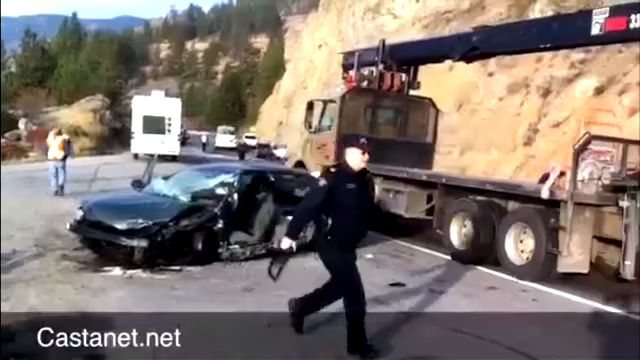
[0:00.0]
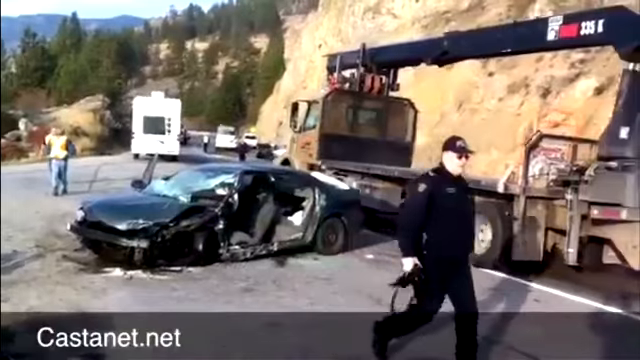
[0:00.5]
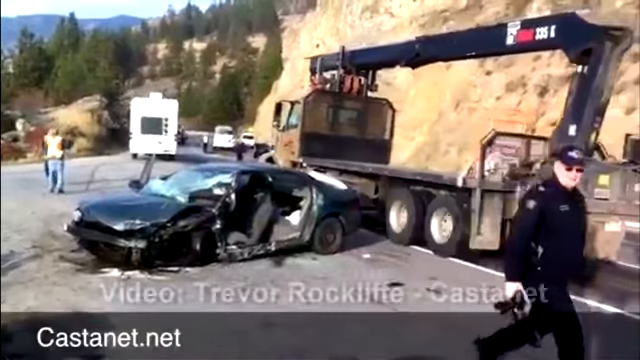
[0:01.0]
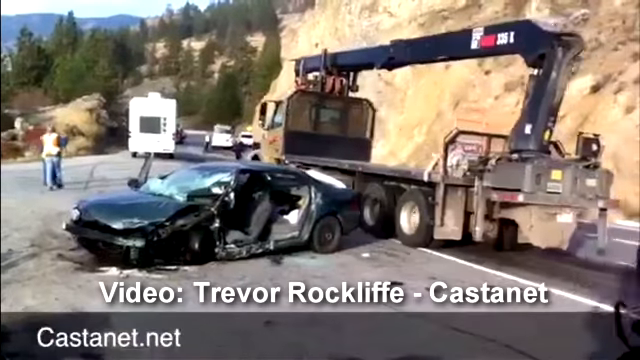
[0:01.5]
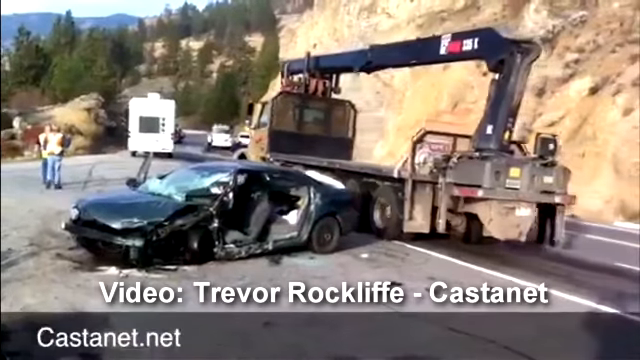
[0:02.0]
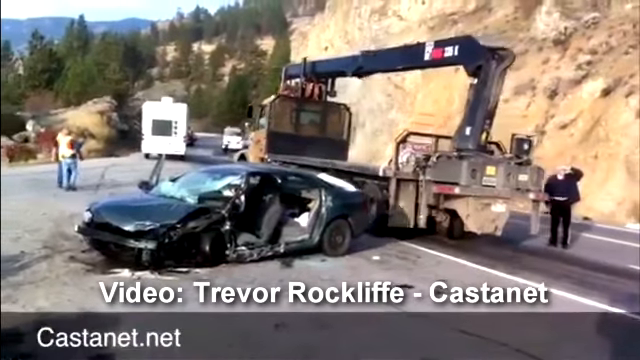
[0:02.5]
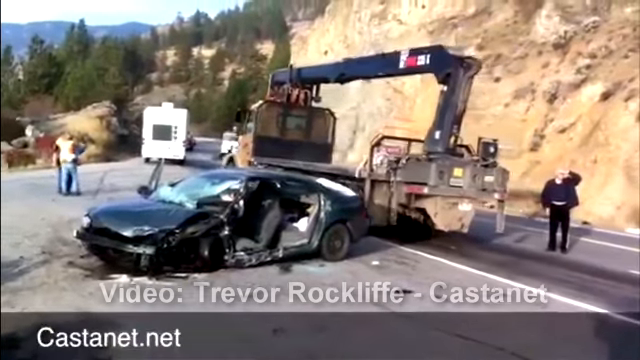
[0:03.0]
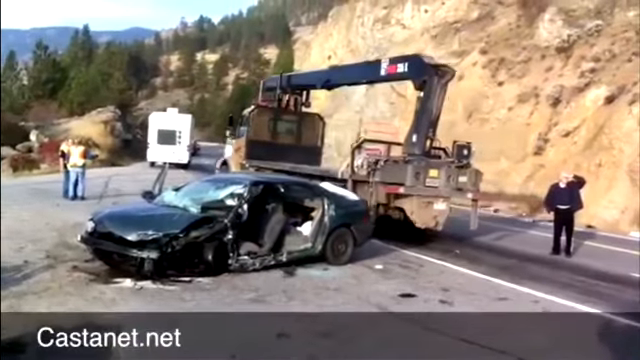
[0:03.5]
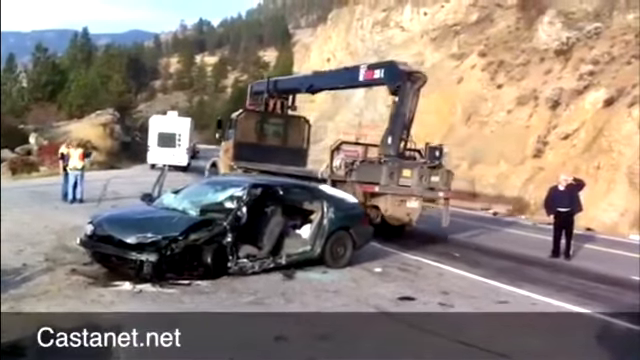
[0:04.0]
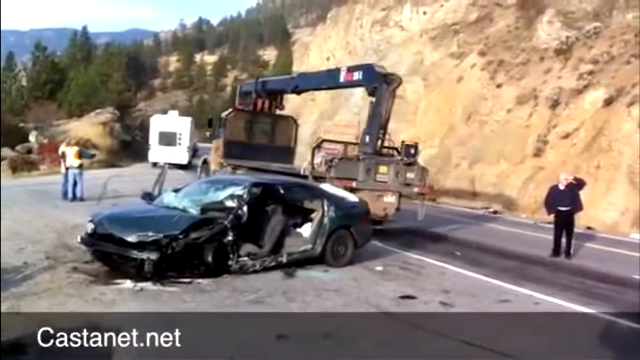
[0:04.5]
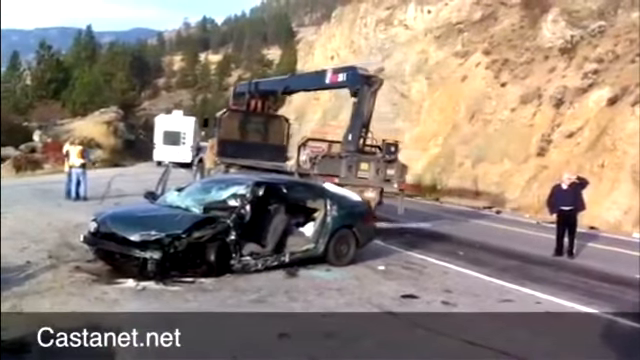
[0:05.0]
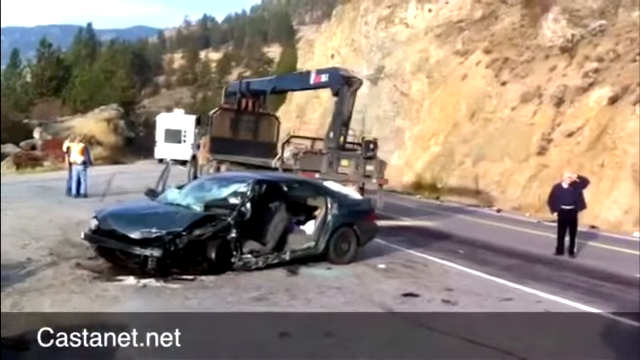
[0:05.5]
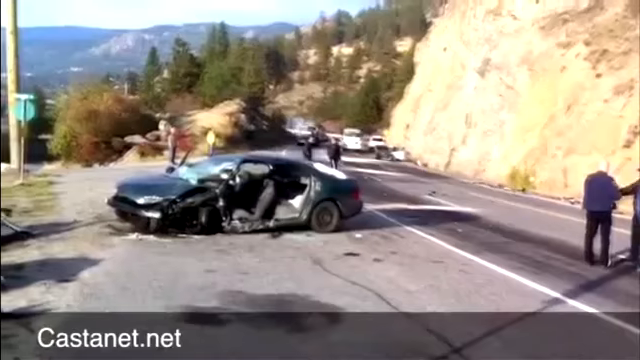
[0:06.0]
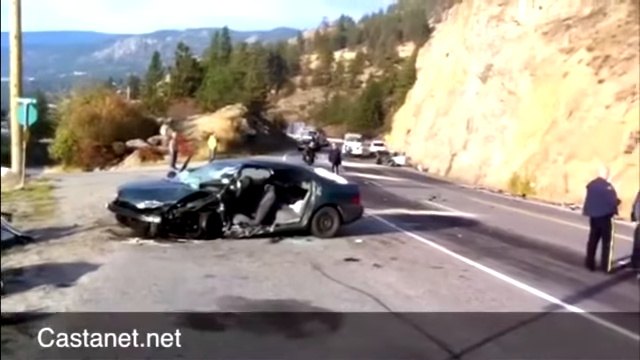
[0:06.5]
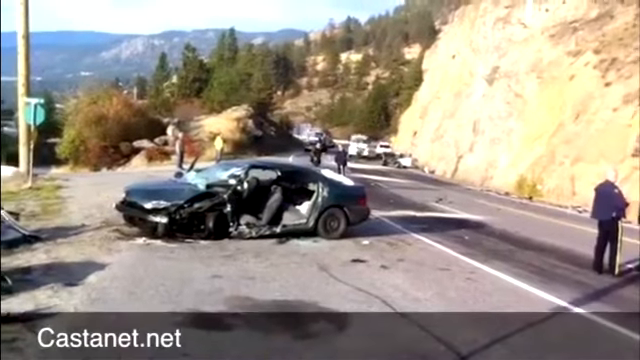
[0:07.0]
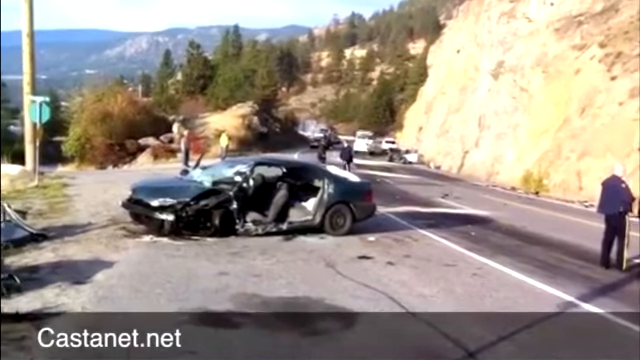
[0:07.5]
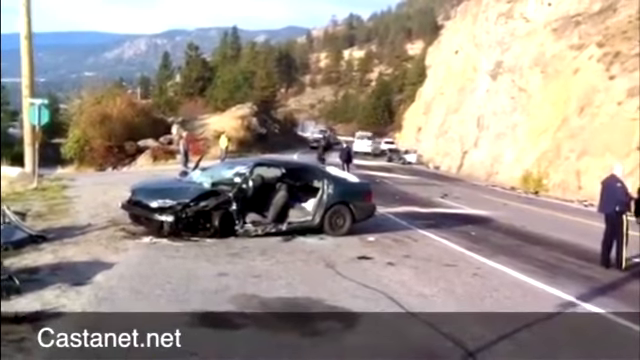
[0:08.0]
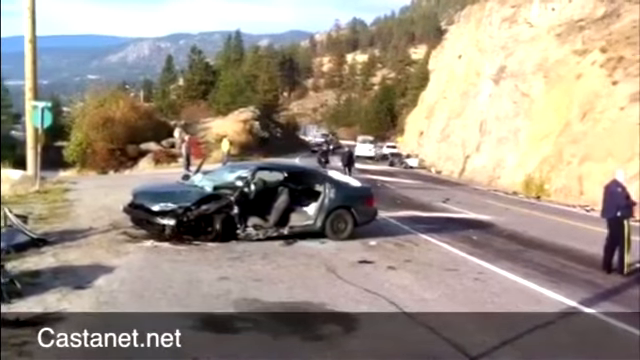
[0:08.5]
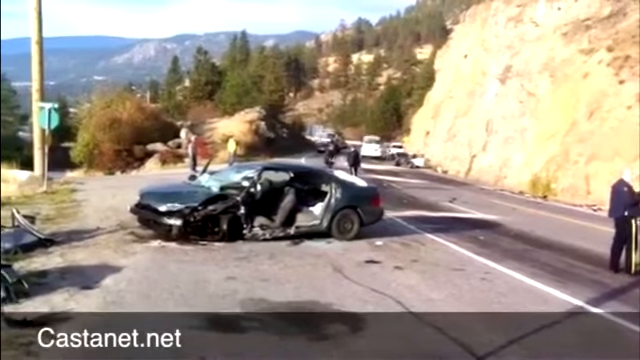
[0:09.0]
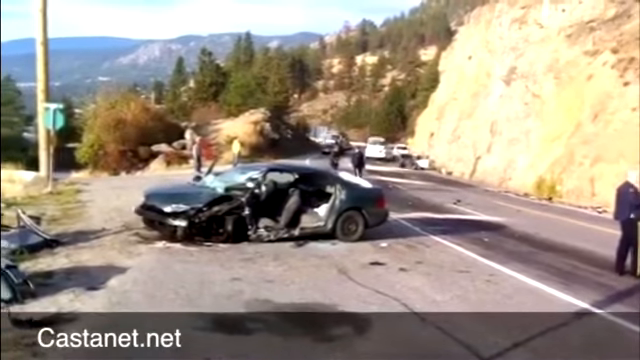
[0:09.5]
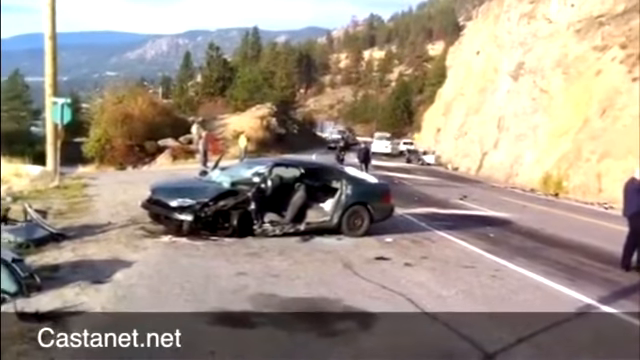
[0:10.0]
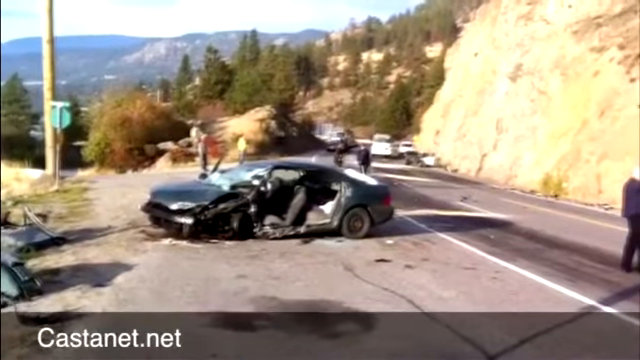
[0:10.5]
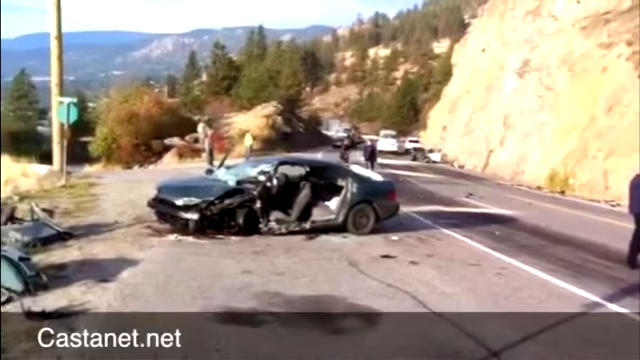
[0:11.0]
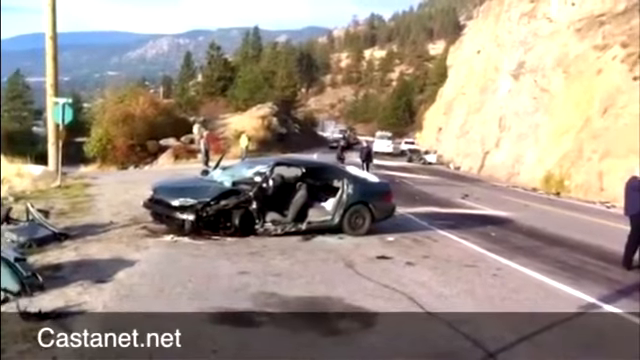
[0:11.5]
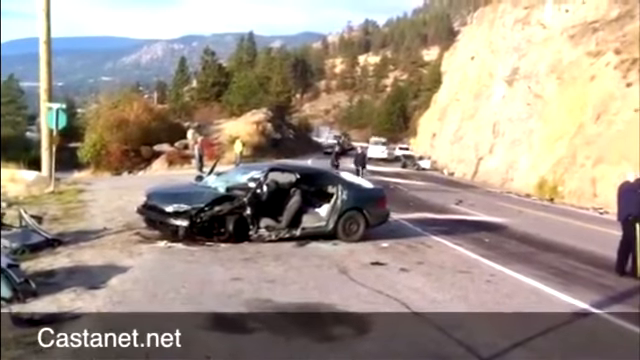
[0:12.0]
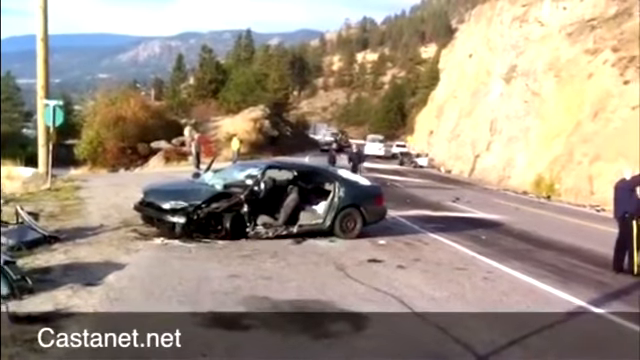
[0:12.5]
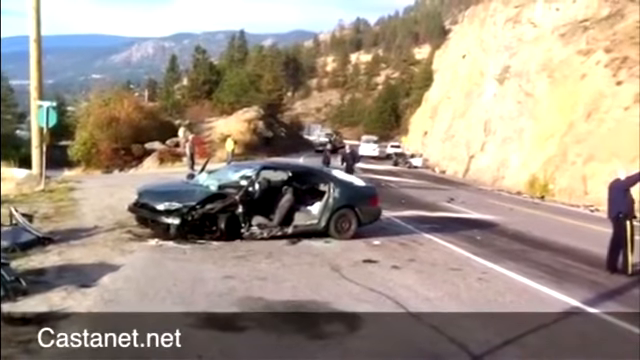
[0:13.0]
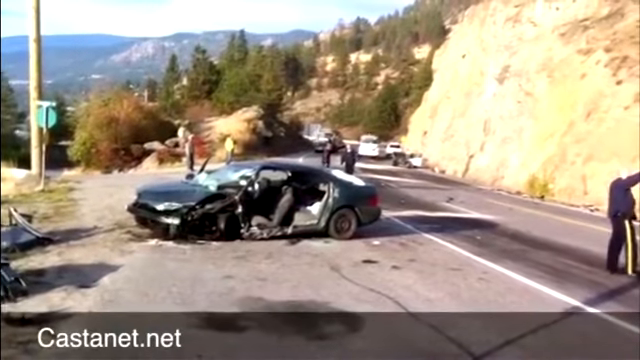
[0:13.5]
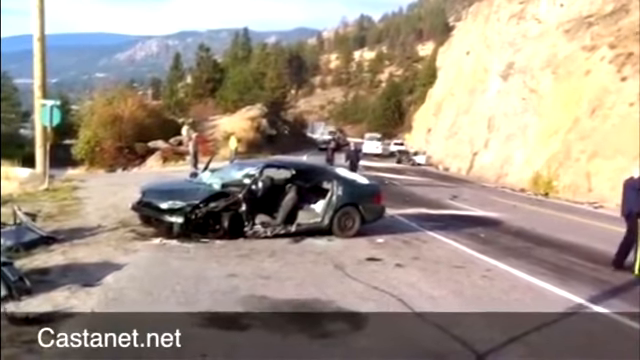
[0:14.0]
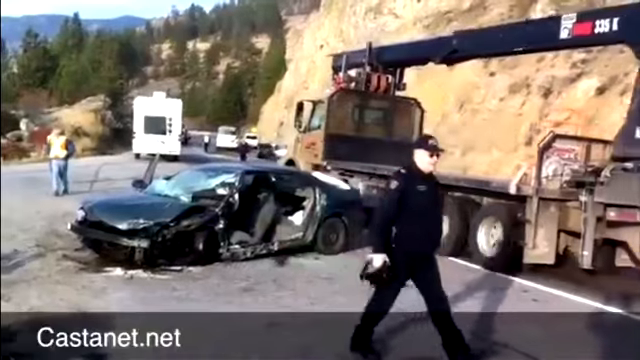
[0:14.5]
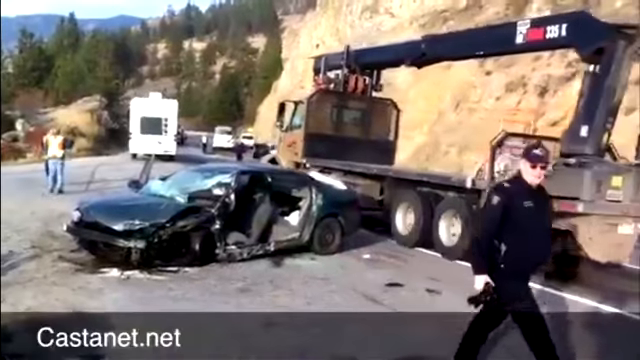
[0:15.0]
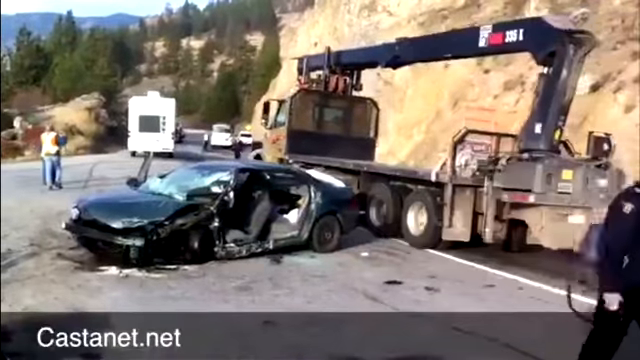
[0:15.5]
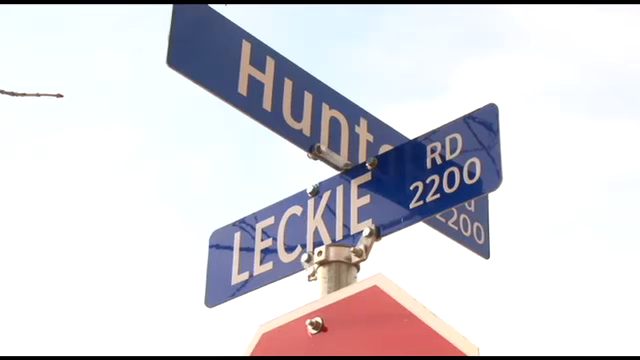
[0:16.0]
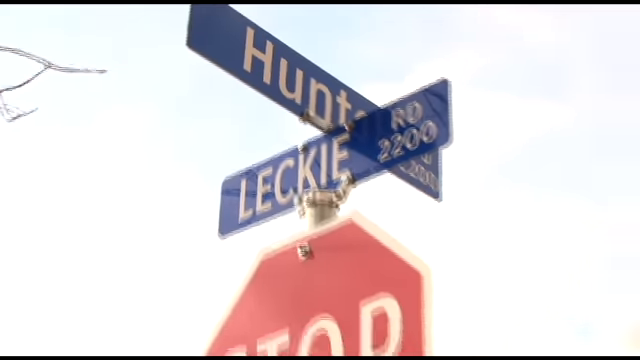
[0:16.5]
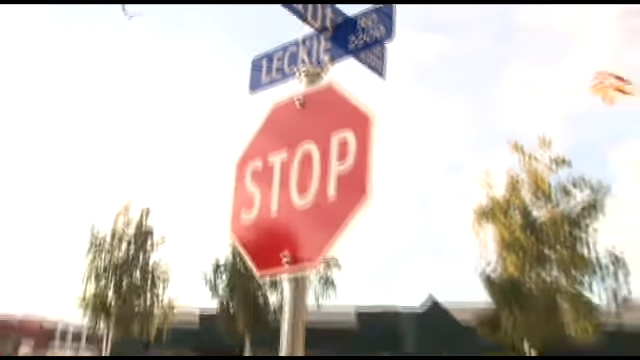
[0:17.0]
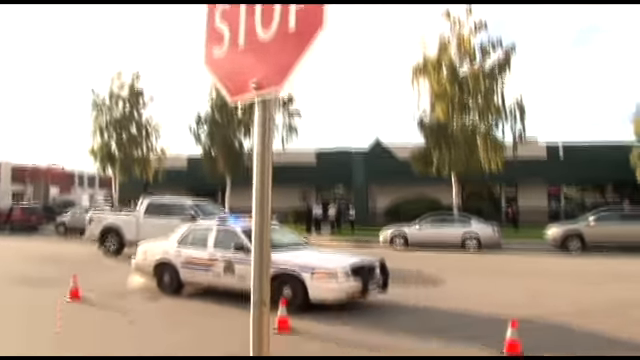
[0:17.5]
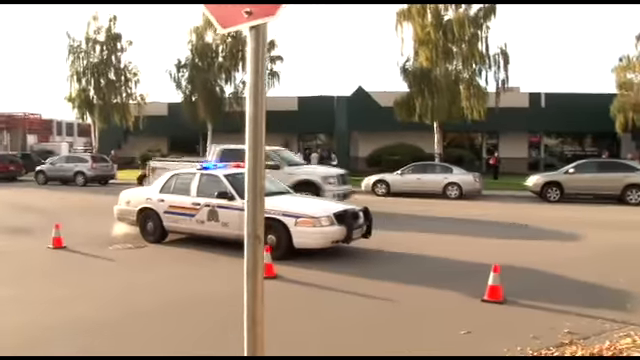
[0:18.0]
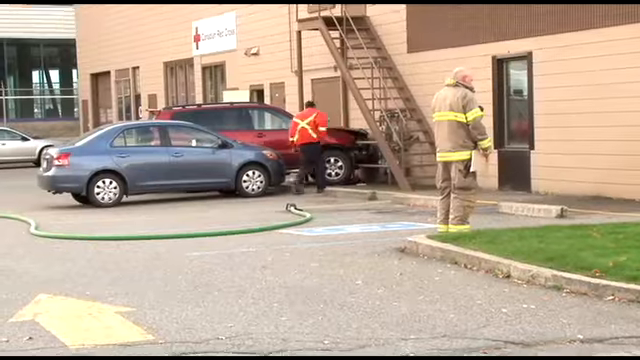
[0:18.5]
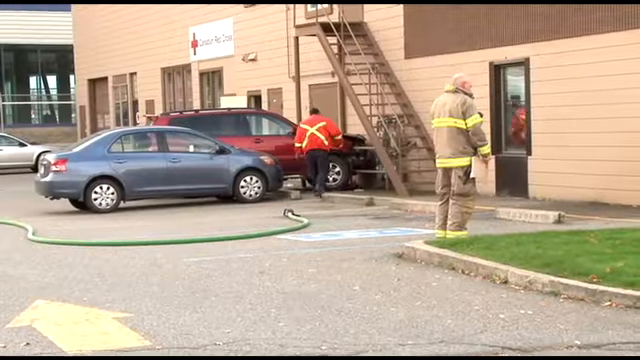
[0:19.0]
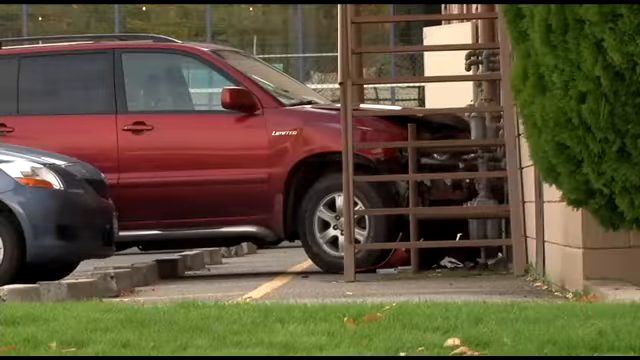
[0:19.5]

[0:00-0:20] The video is from castanet.net and shows a very bad car accident. A sedan is on the side of the road with its driver's seat completely gone, and its hood and windshield are completely caved in. Text below reads "Video Trevor Rockcliffe-Castanet". A tow truck passes behind the damaged car, and a few other first responders are present; one, apparently a cop or a paramedic, is walking around. The accident happened on a winding road with a rocky hillside next to it, and two trucks are up ahead. The tow truck tries to squeeze in between the rocky cliffside and the damaged car and passes through. The next scene shows just the car off the side of the road, with investigators closing the area and taking pictures. Some car parts from the car are off to the side. Then the intersection where the accident happened is shown, Hunt and Leckie Road, with a stop sign under the street sign.